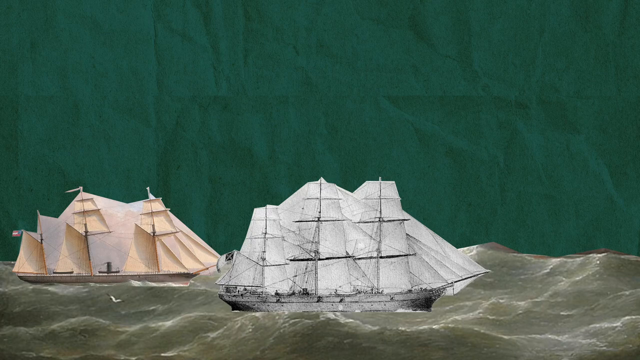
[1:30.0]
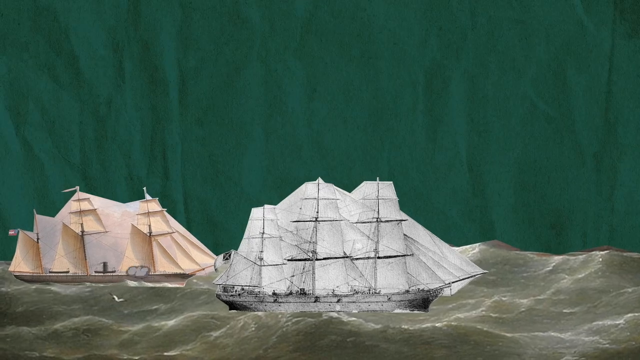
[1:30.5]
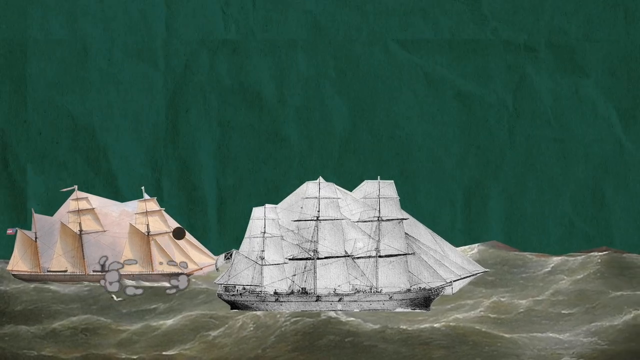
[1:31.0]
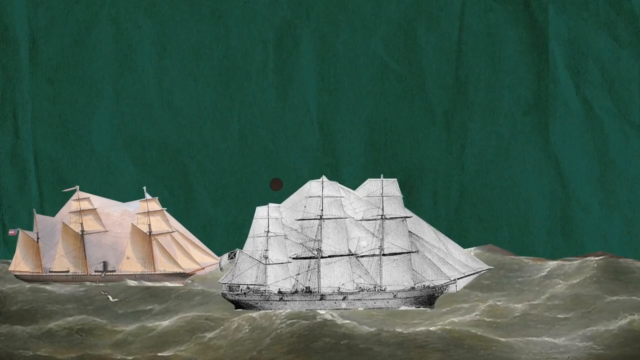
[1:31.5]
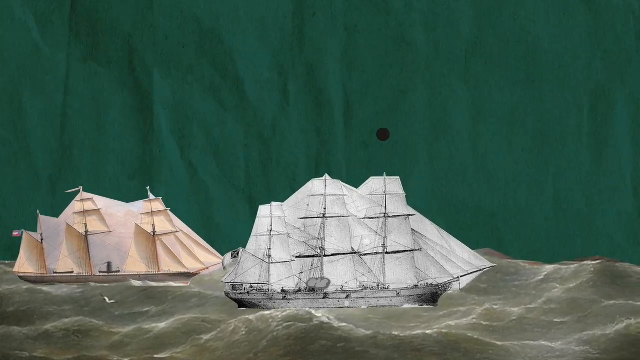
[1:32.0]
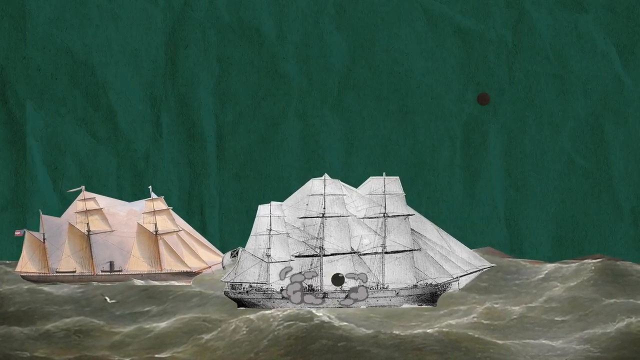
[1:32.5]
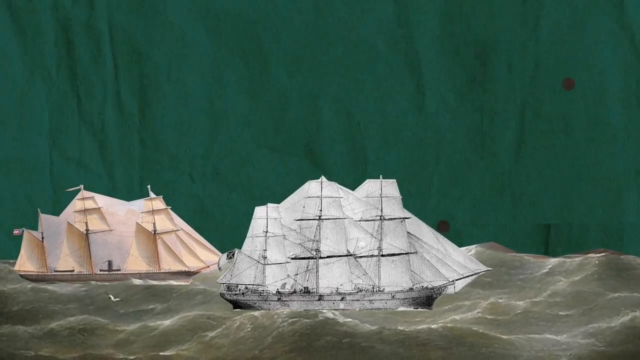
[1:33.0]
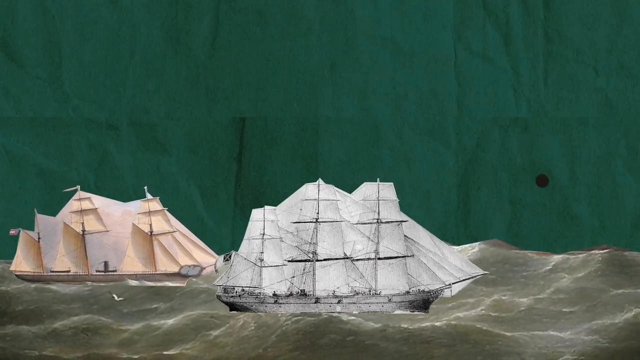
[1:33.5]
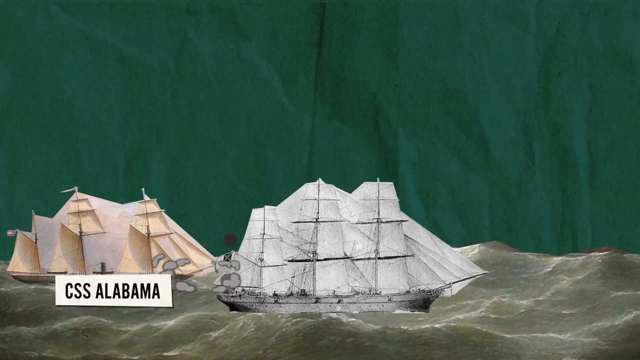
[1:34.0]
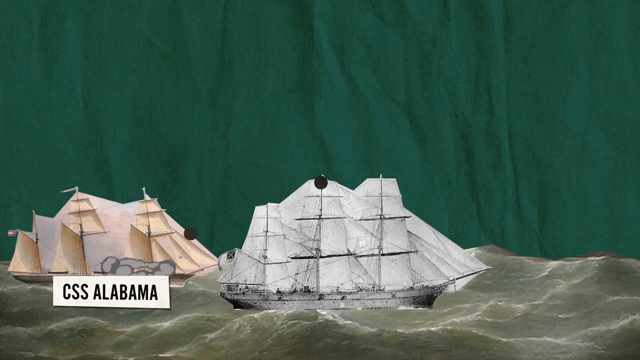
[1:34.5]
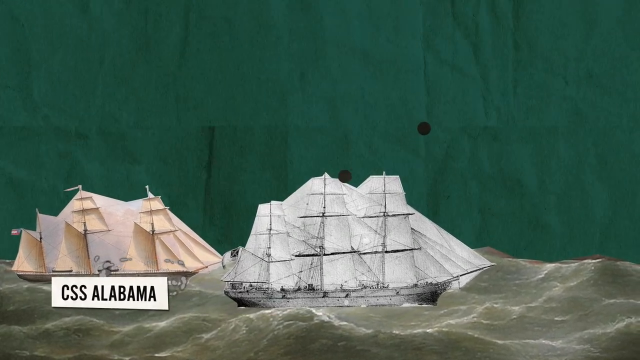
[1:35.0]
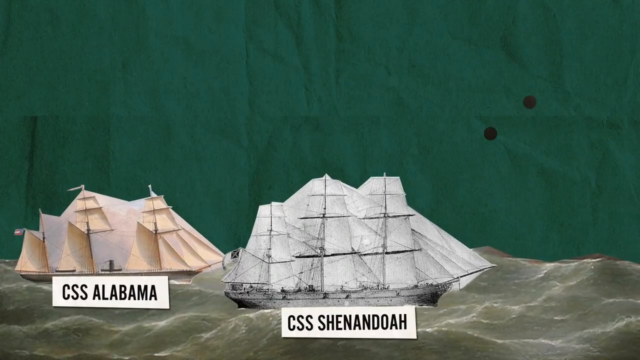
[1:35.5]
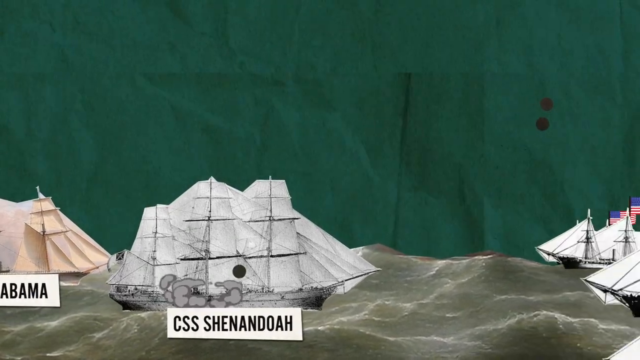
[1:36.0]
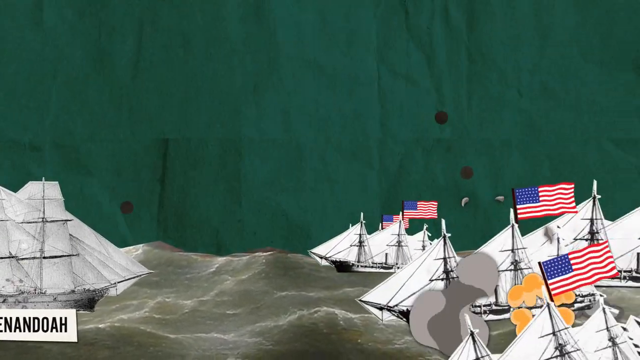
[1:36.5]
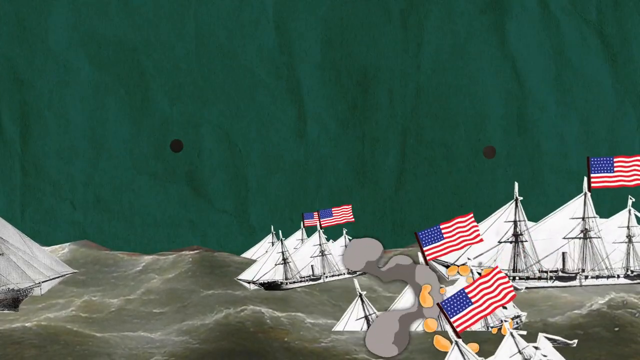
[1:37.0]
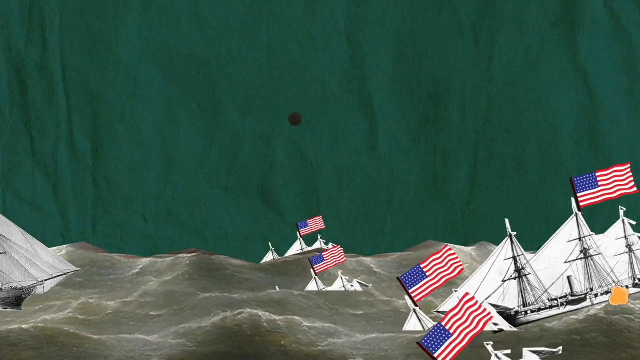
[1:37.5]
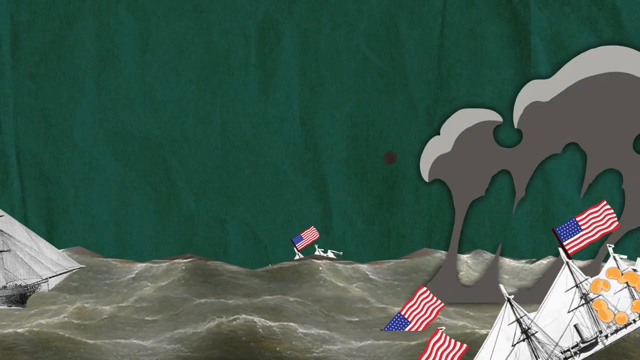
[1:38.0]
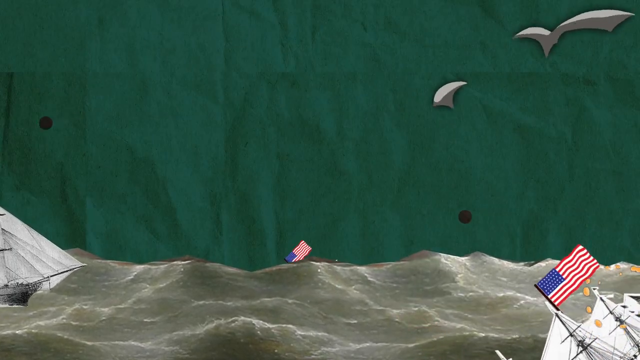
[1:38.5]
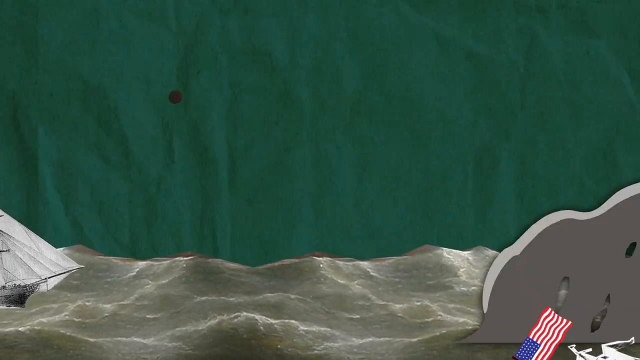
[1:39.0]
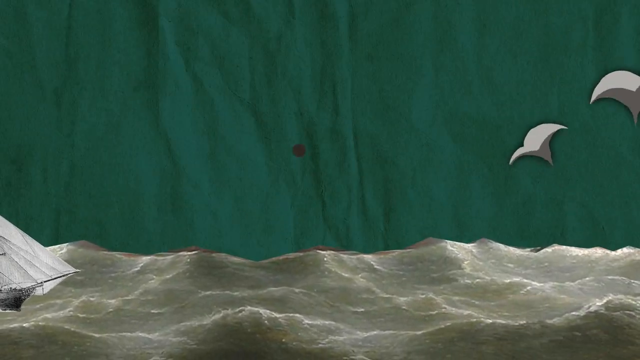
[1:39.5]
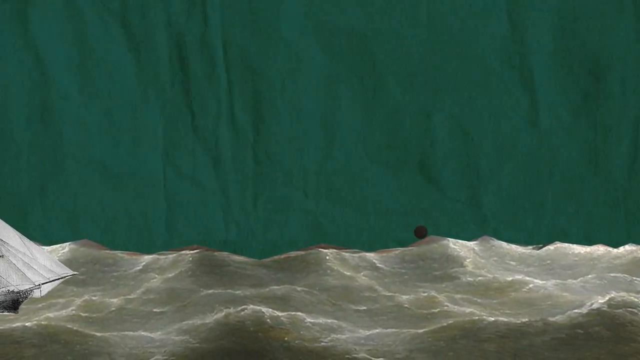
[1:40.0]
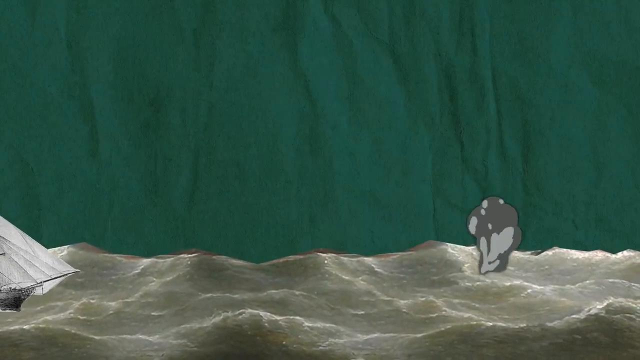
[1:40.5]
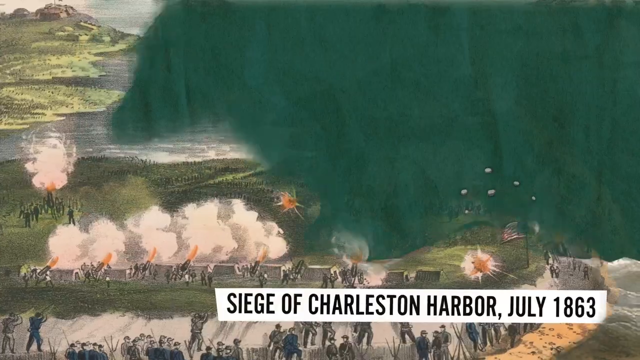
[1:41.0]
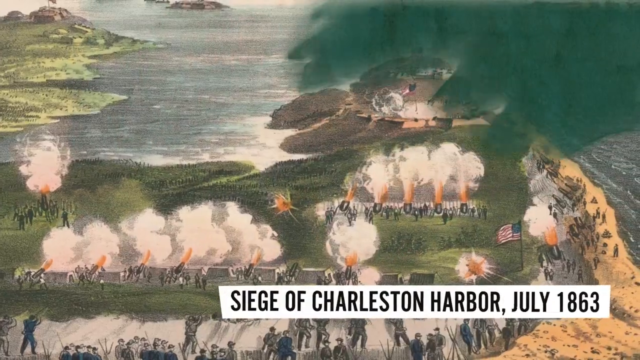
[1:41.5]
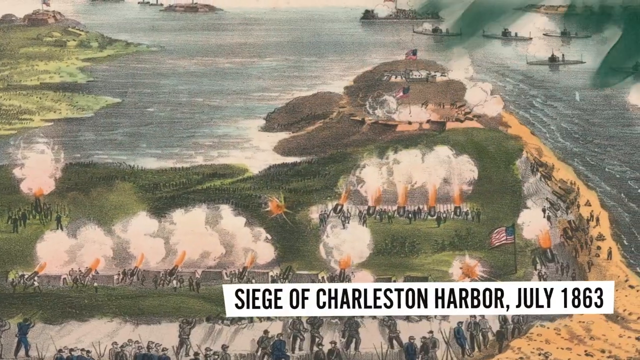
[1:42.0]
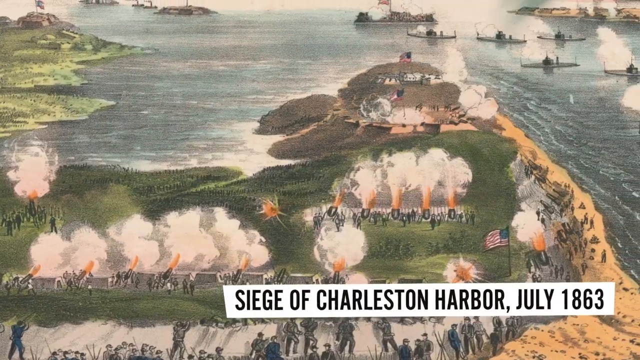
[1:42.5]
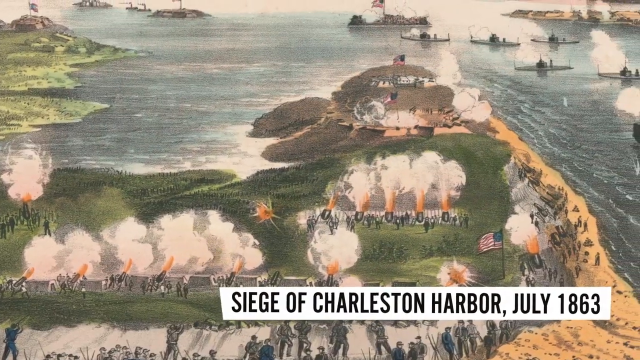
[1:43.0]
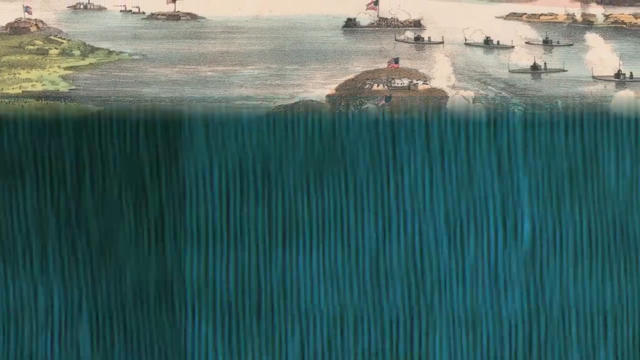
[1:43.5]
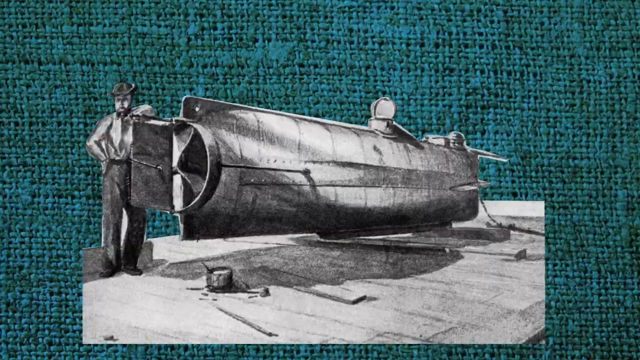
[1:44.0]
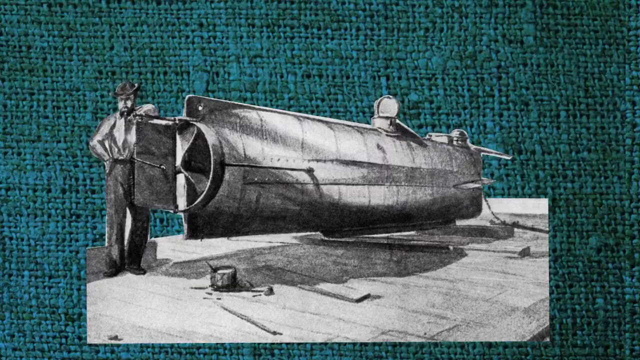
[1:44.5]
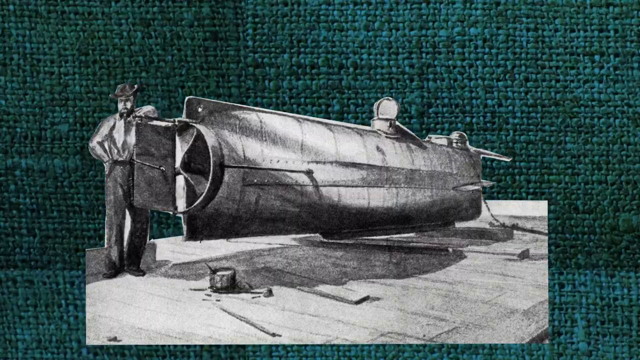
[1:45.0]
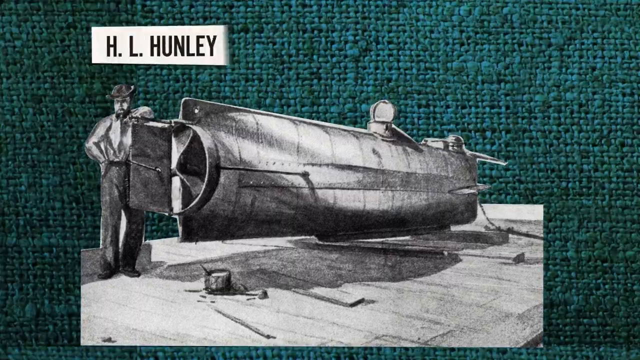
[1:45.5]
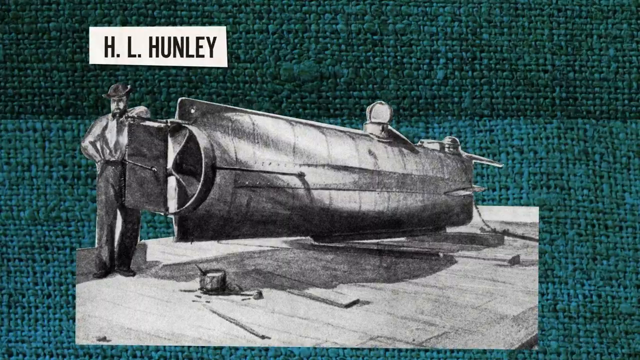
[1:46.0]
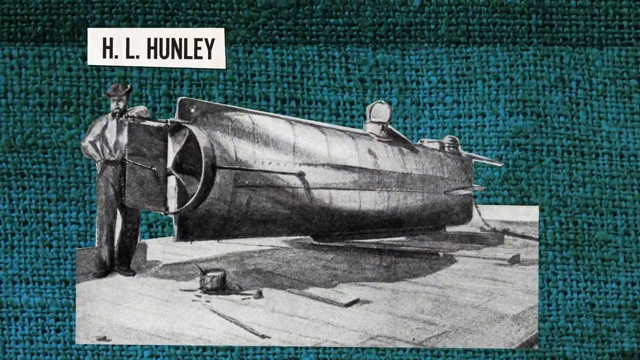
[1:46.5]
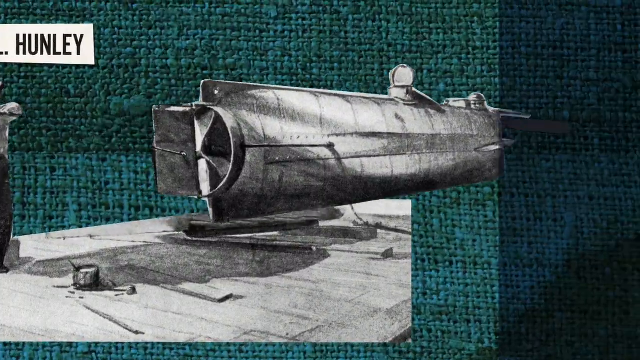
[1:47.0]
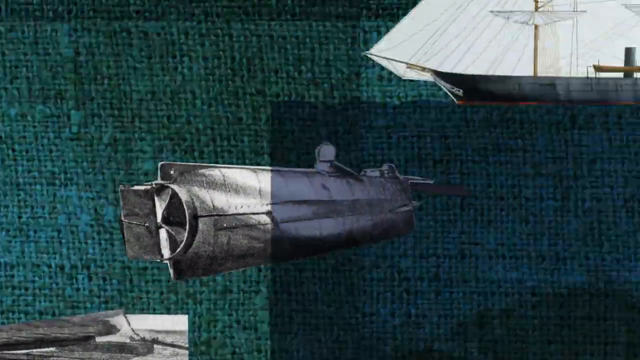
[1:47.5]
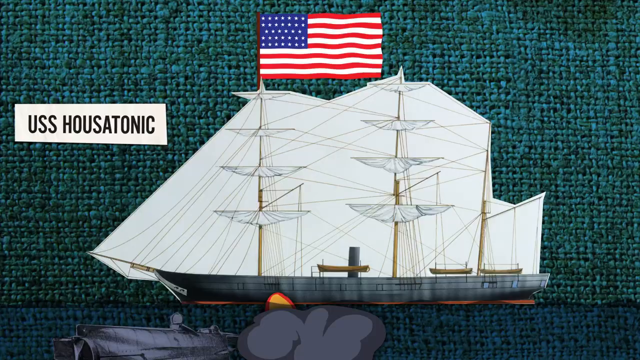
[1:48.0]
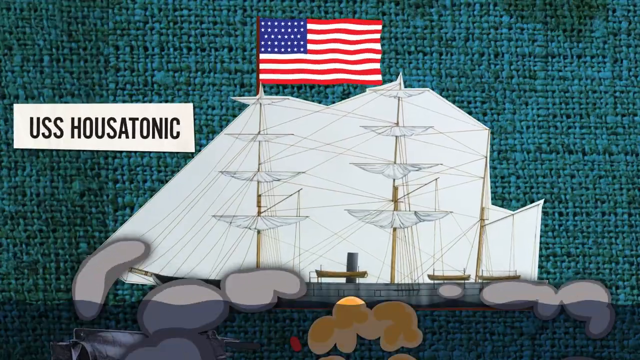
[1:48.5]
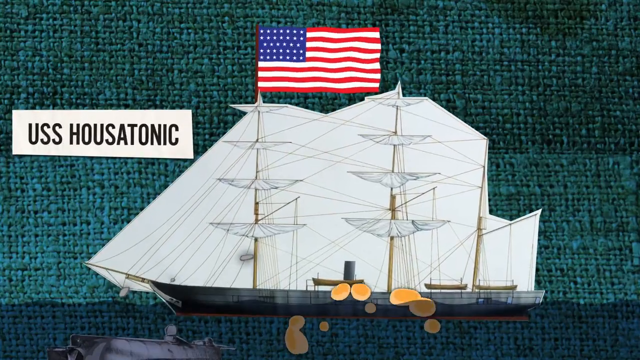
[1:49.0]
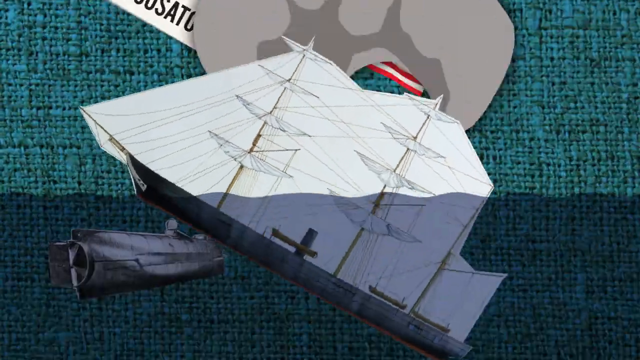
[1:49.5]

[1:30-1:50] A recreated scene shows two historical ships on water shooting cannonballs toward a number of smaller ships. The smaller ships have American flags on them, and they all sink after the cannonballs are fired toward them. A new illustrated image shows an area of land surrounded by a lot of sea, with many different cannons going off, and text that says "the siege of Charleston Harbor, July 1863." The scene switches to what looks like a blue fabric background with an illustrated image of a large machine in front of it, looking like maybe a large mechanical part for a ship or an aircraft. A person is standing in front of it, and a label says "H.L. Hunley." Then a boat is shown being sunk when that machine goes over near it. The sinking boat has a flag for the Union side, so it appears to be a U.S. ship, and its label says "USS Housatonic."